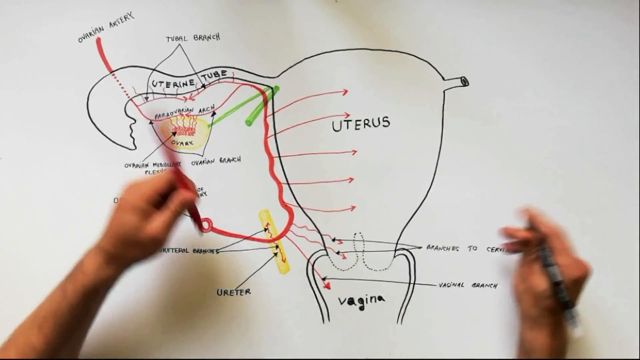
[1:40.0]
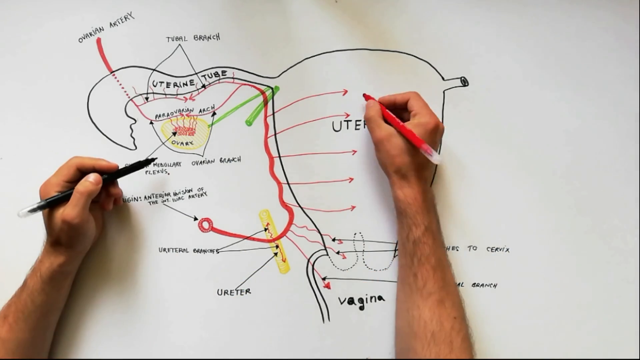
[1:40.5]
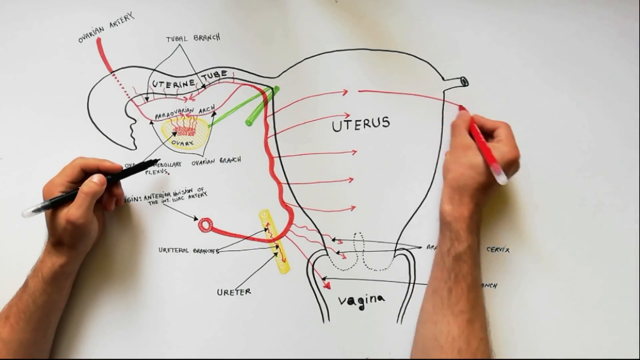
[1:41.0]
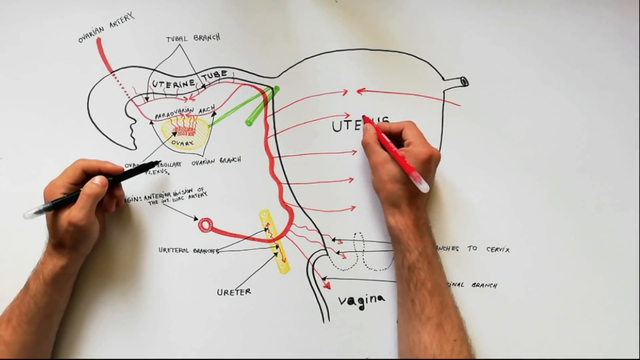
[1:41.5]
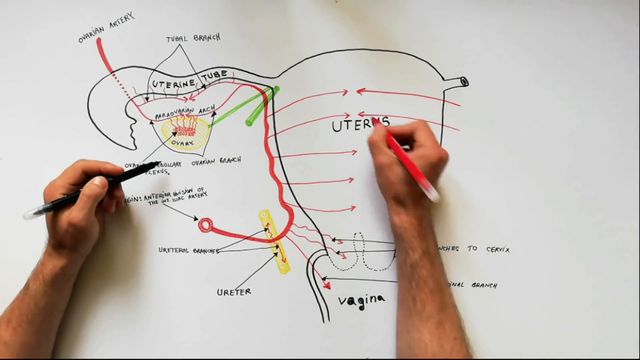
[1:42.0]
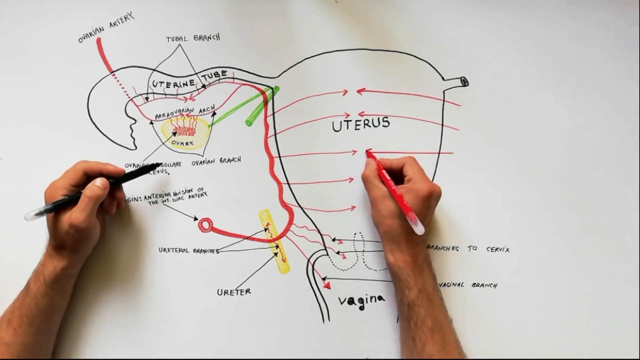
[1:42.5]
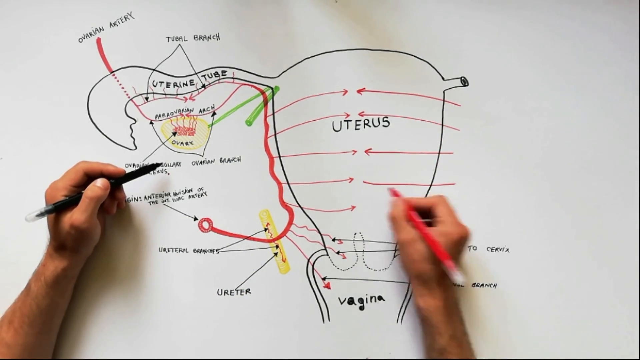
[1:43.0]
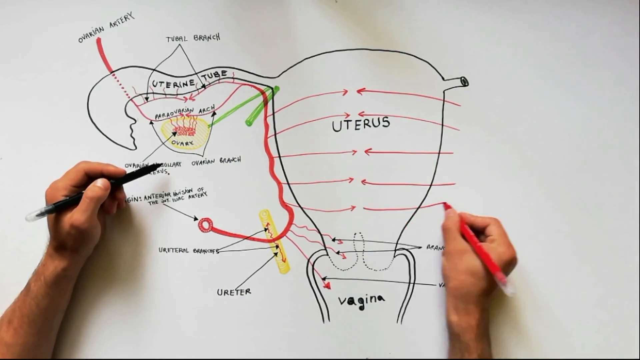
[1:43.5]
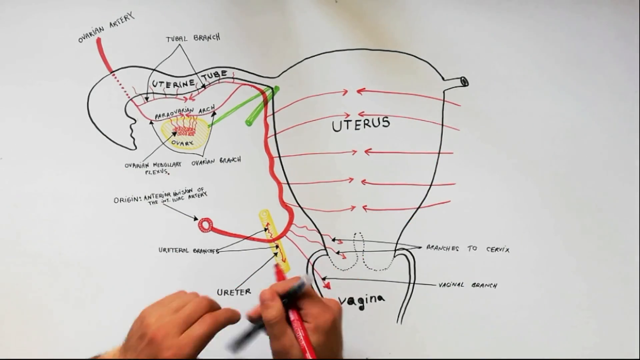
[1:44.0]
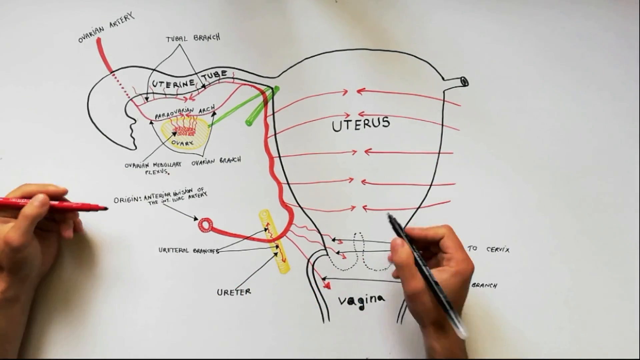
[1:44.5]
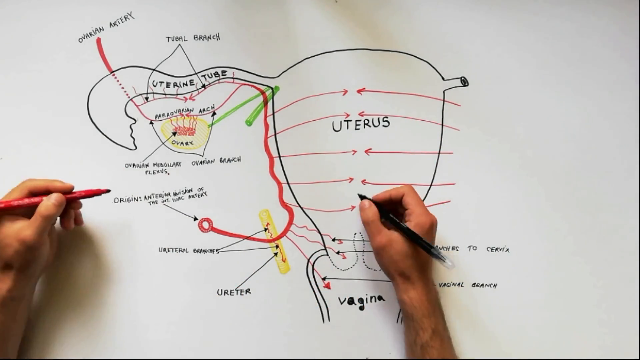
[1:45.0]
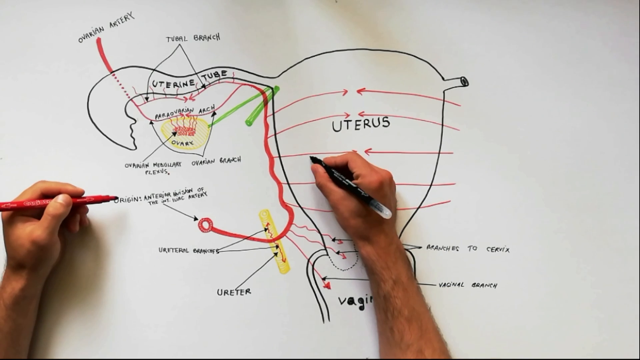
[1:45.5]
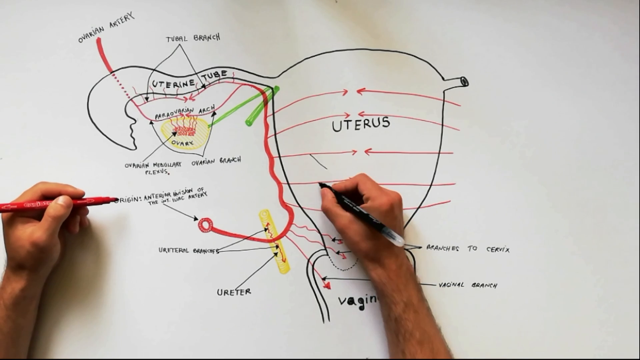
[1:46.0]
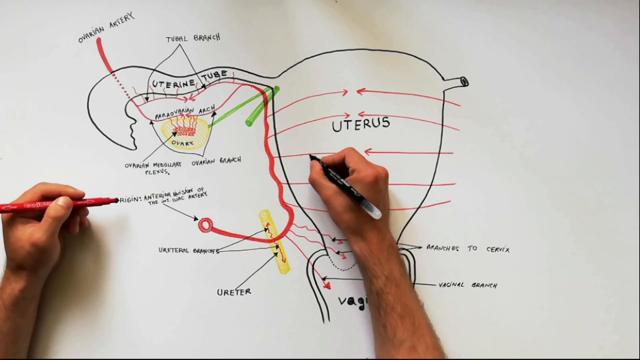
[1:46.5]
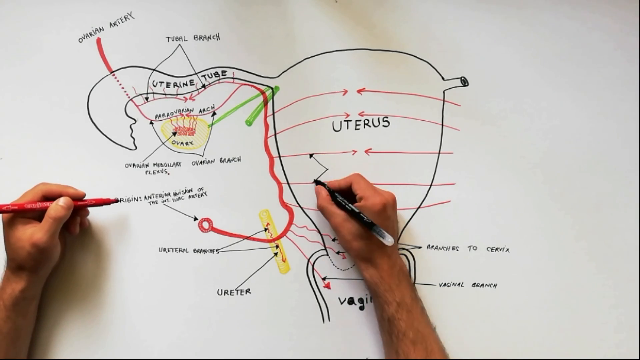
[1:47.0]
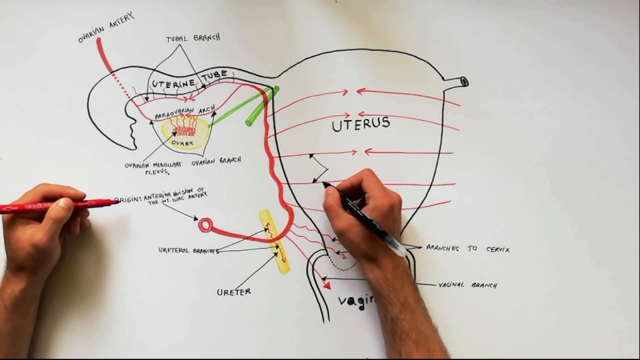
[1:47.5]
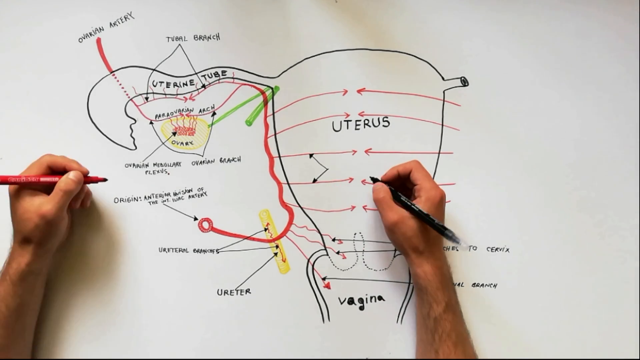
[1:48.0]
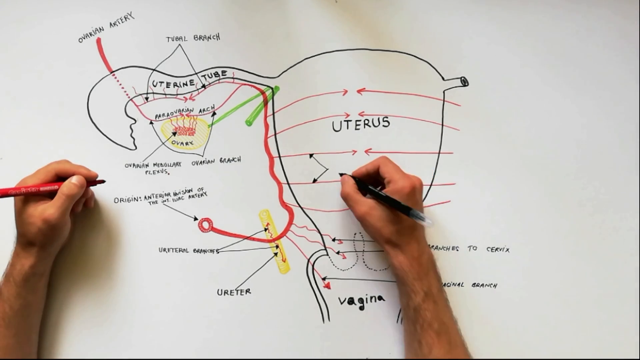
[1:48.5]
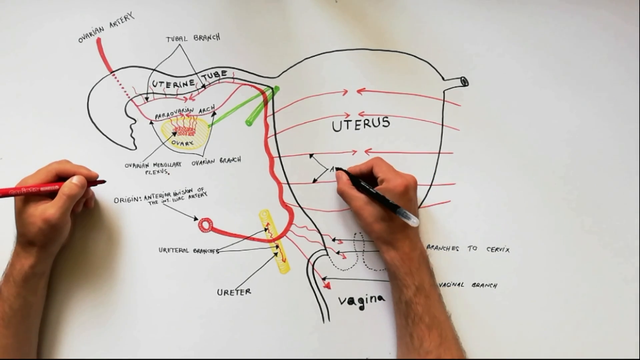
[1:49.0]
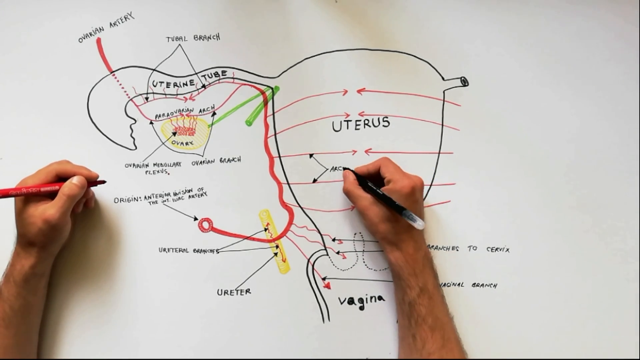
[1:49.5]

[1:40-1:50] A drawing of a uterus is shown: an oval shape drawn with a black marker, with the word "uterus" written in black in the middle. A black tube comes off the top of it, with "uterine tube" inside. Underneath that is a yellow circle with the word "ovary" written on it in black. A tube comes off the bottom left side of the oval and another off the right side, with the word "vagina" written in black between them.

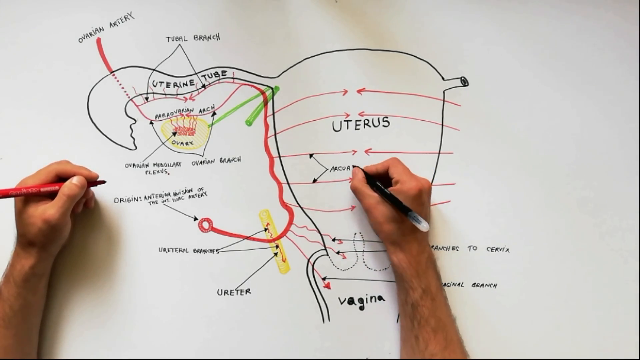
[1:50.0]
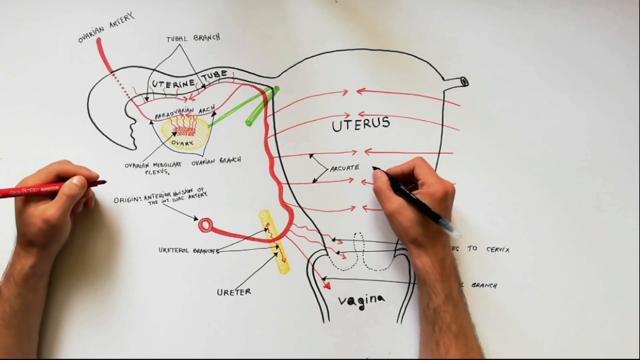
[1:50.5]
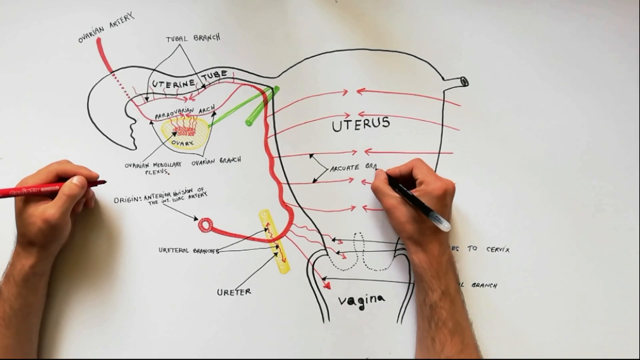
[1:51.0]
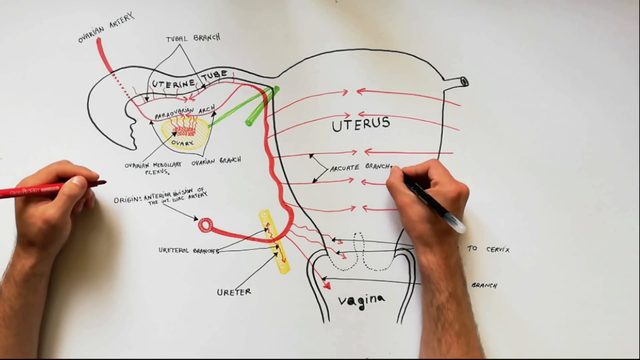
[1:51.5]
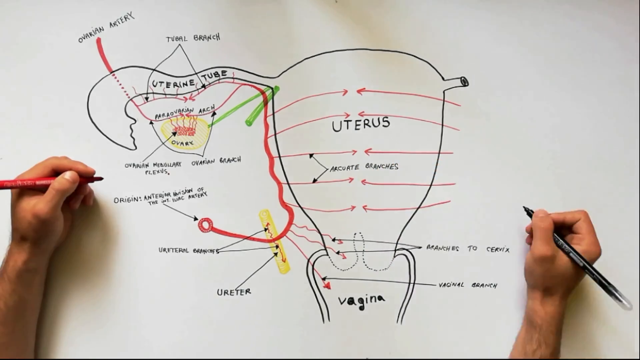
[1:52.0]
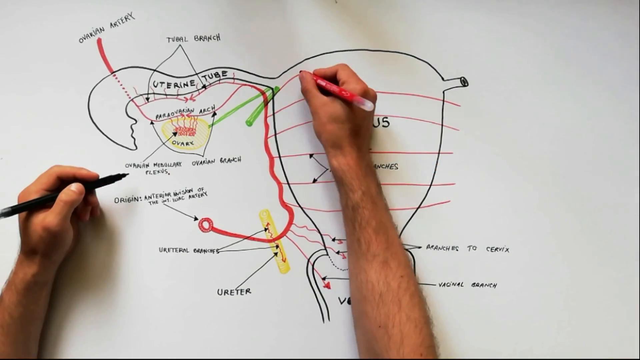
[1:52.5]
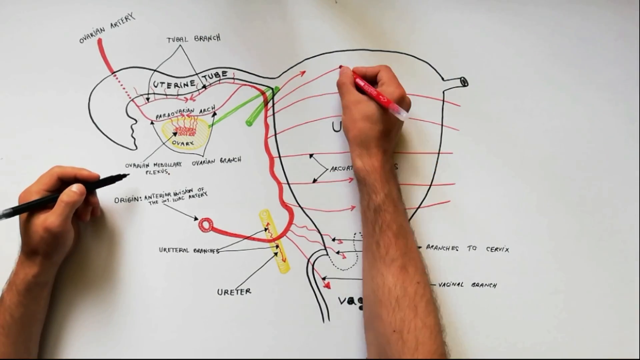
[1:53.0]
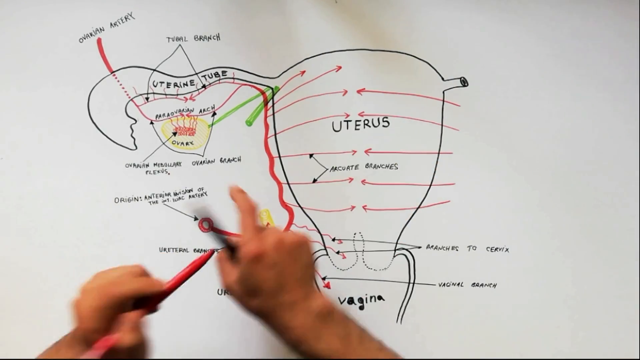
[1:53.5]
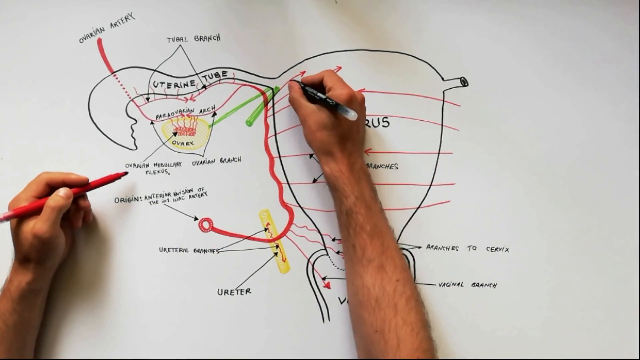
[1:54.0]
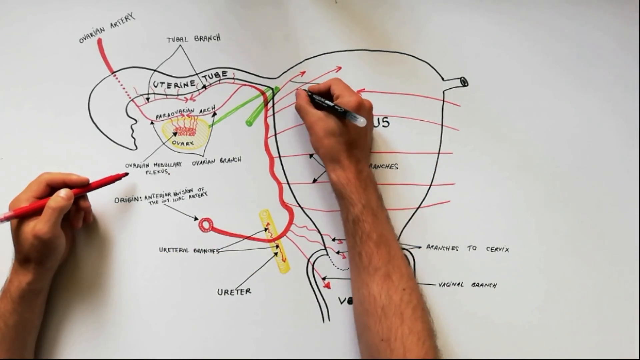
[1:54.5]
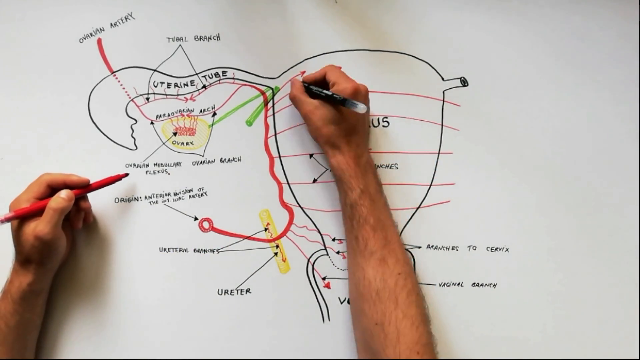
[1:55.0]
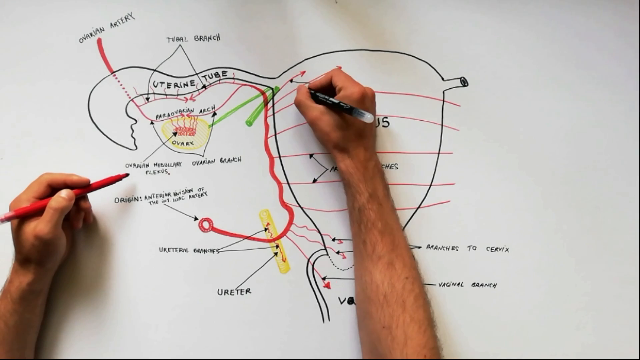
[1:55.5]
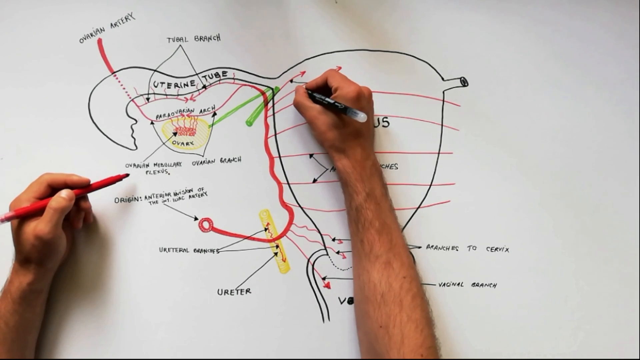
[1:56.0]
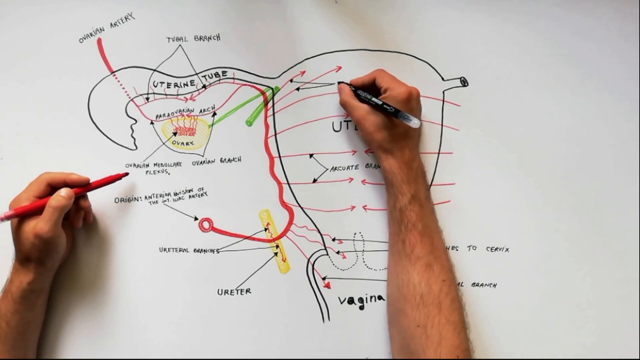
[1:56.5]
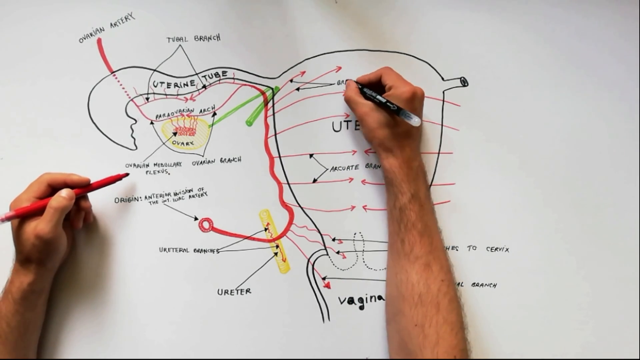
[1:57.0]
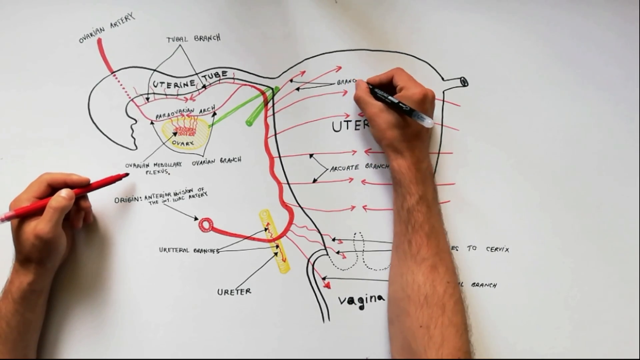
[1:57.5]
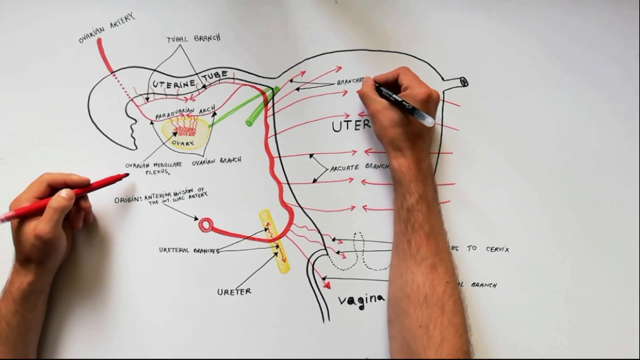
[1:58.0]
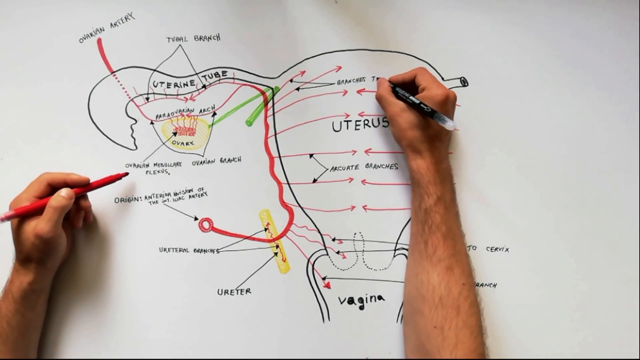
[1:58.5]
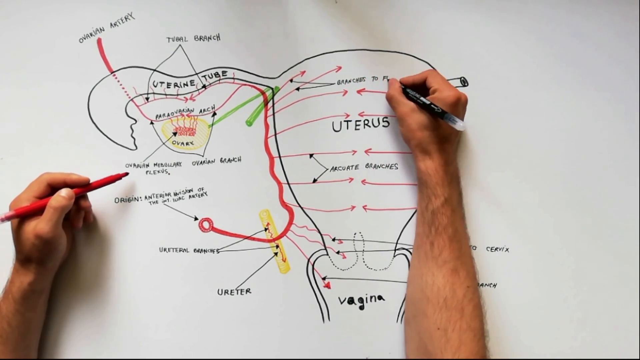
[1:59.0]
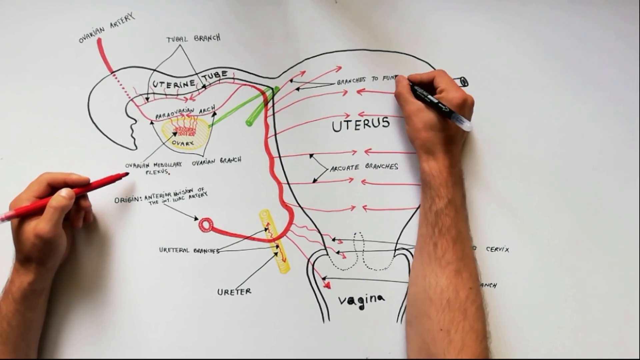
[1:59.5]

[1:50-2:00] An oval shape drawn with a black marker has the word "uterus" written in black marker in its middle. A small tube comes off the top of the oval with "uterine tube" written inside it. Tubes also come off the left and right sides at the very bottom, with the word "vagina" written in black between them. The person's left and right arms are on the board; the right hand holds a red marker and the left hand holds a black marker, and they are drawing the details that go with the diagram.